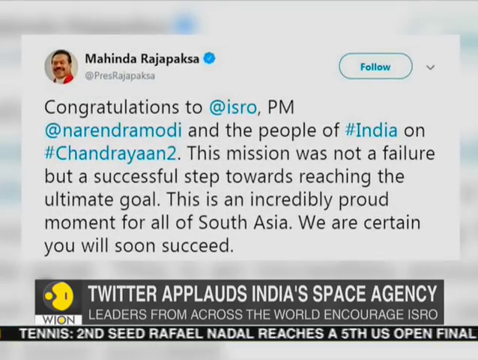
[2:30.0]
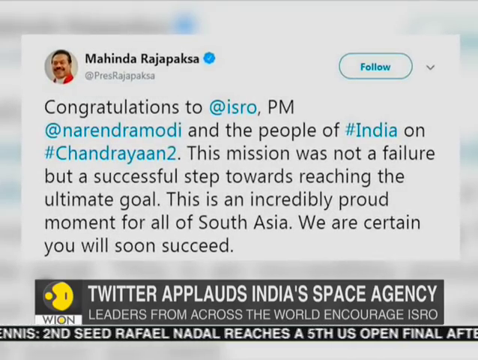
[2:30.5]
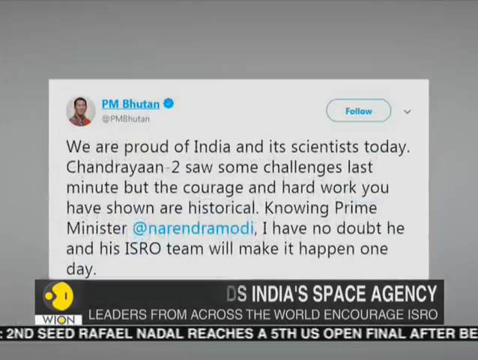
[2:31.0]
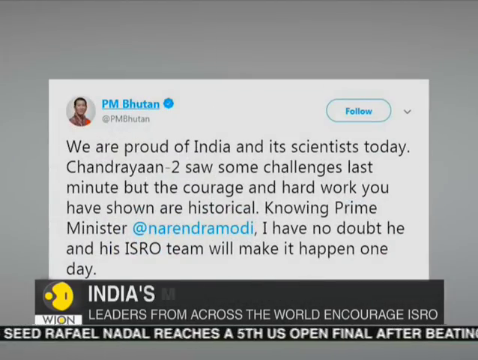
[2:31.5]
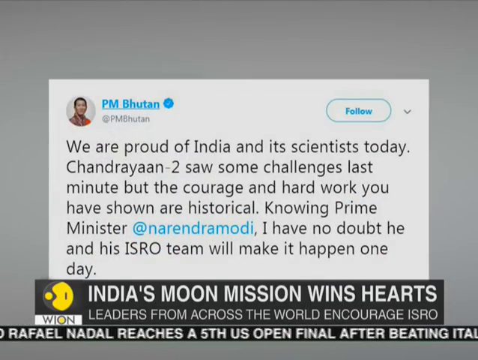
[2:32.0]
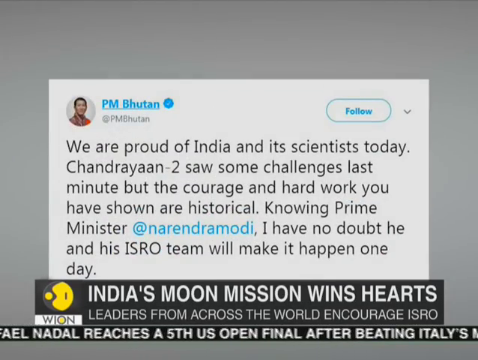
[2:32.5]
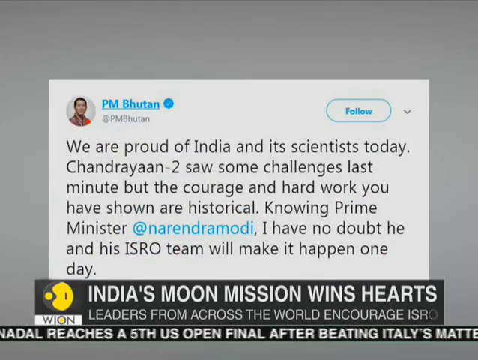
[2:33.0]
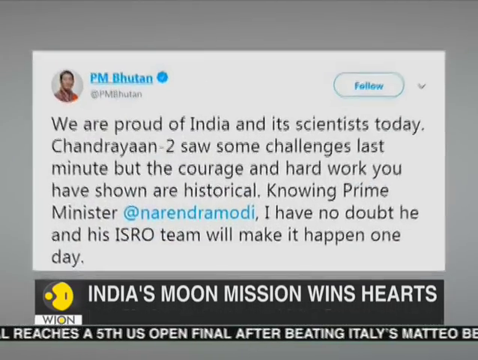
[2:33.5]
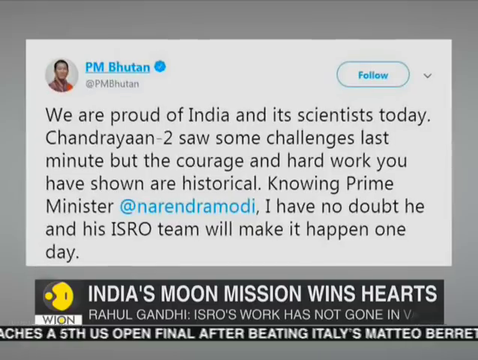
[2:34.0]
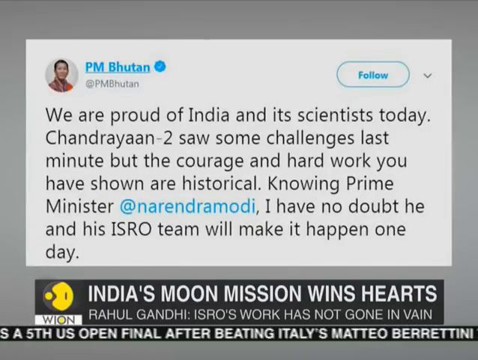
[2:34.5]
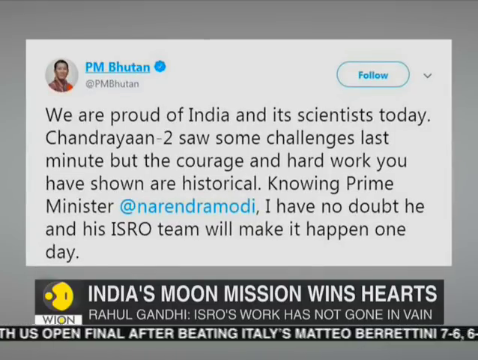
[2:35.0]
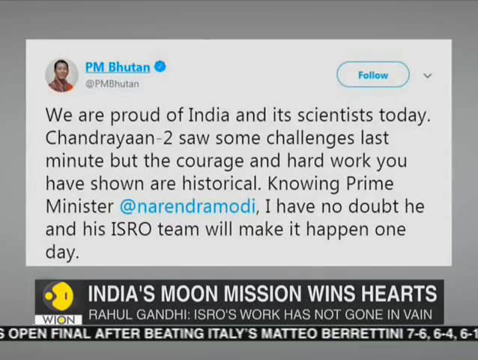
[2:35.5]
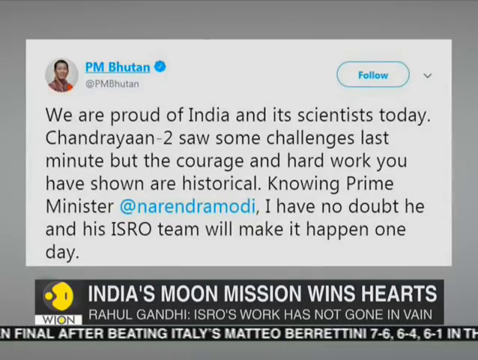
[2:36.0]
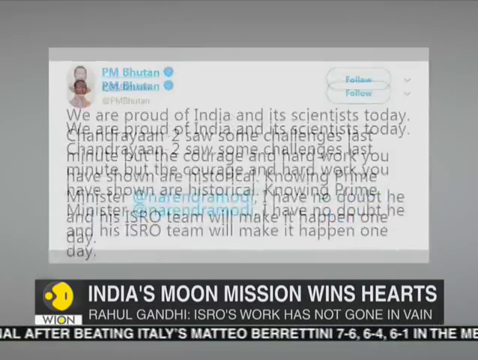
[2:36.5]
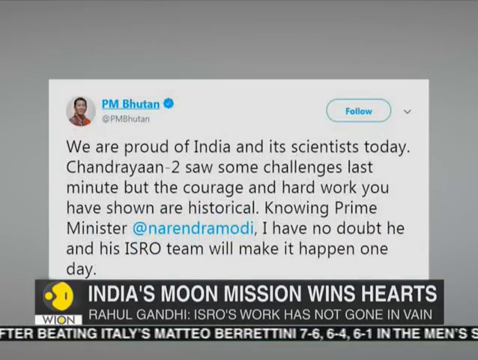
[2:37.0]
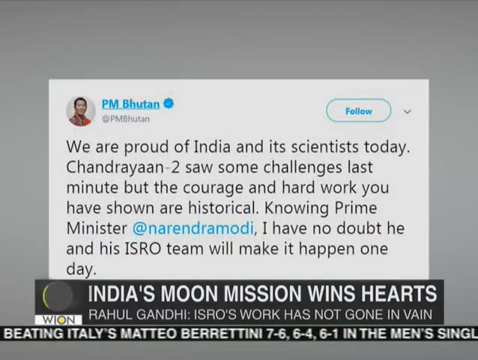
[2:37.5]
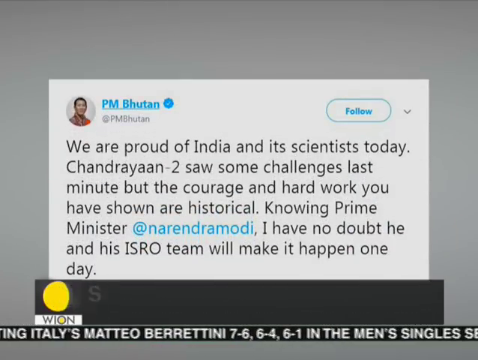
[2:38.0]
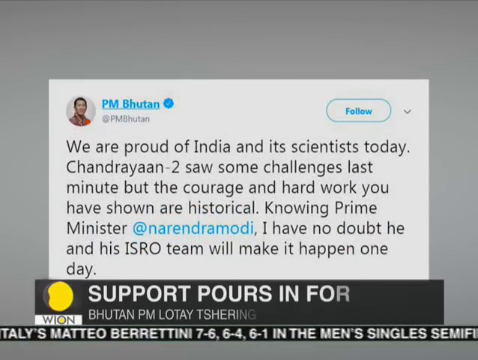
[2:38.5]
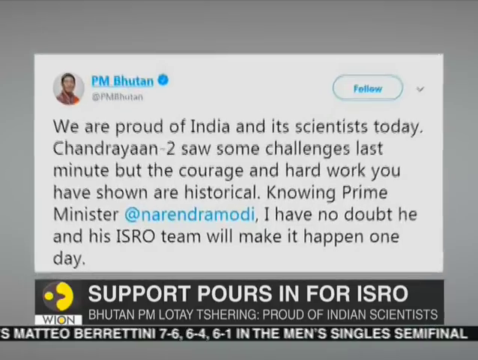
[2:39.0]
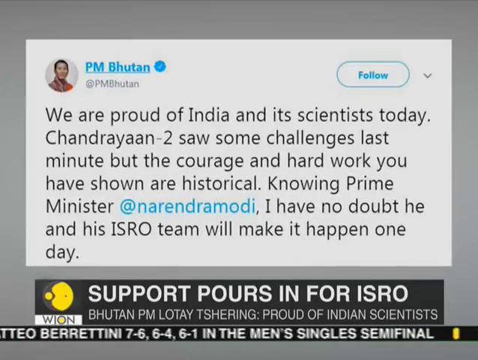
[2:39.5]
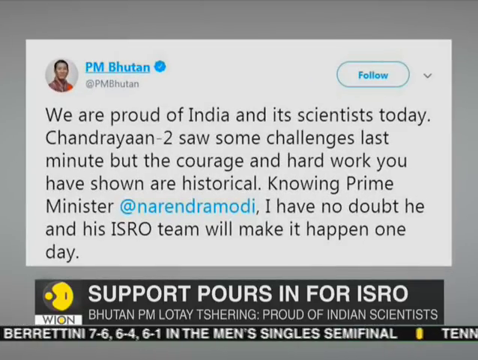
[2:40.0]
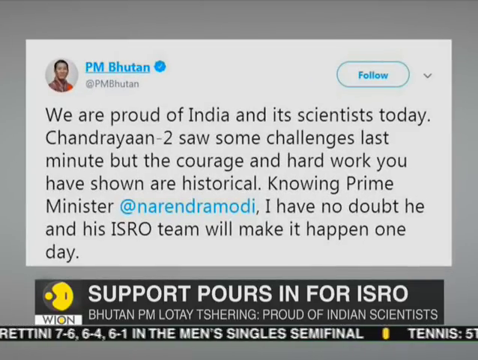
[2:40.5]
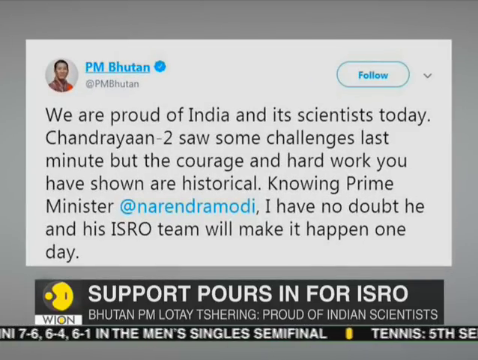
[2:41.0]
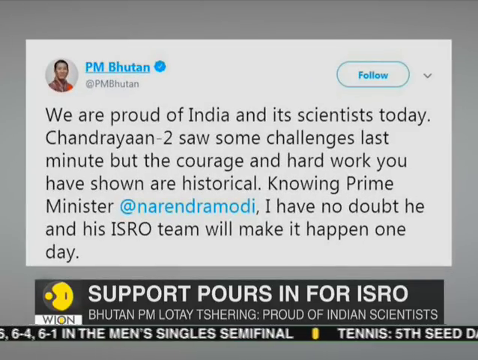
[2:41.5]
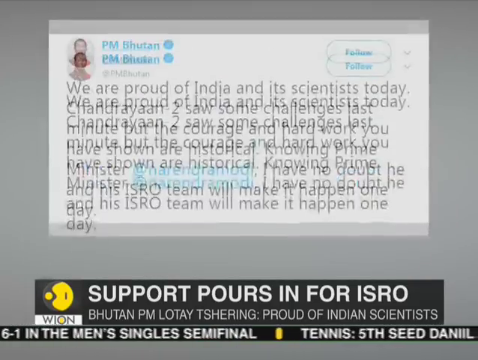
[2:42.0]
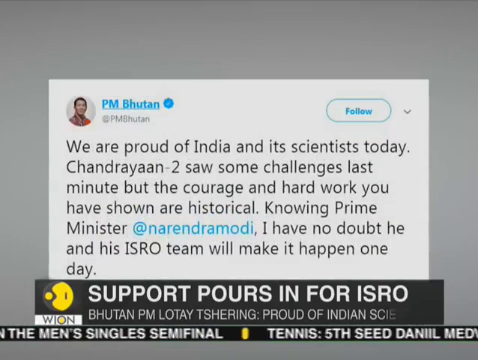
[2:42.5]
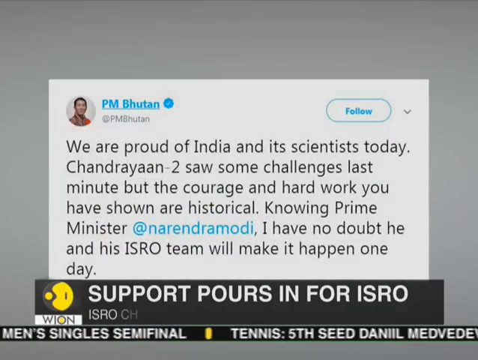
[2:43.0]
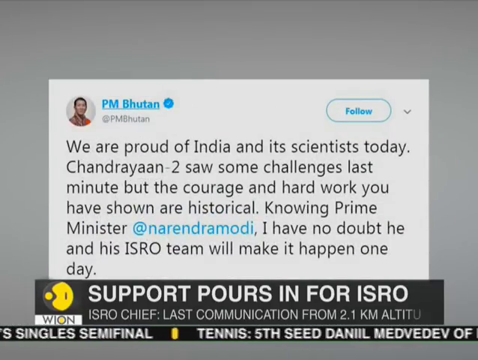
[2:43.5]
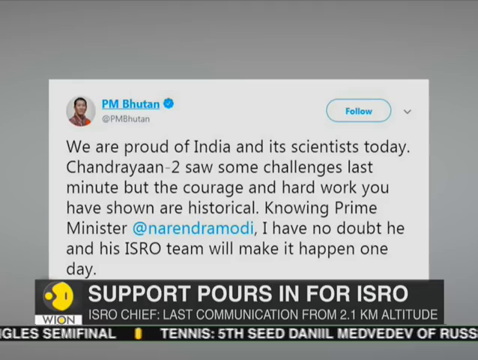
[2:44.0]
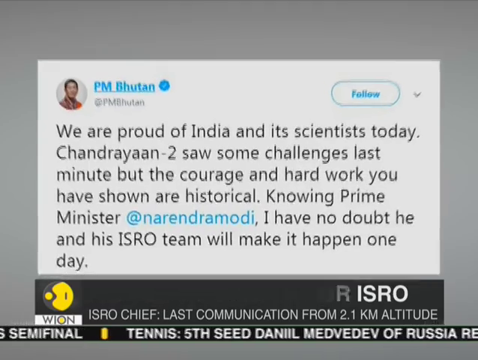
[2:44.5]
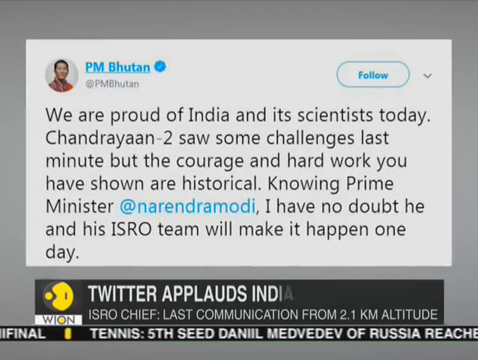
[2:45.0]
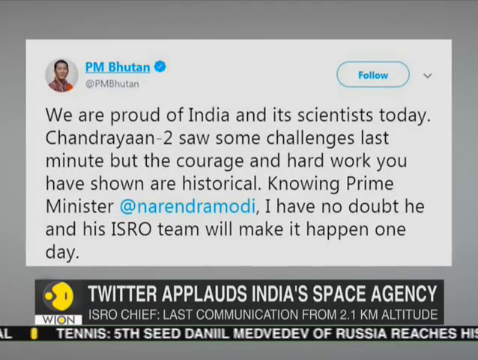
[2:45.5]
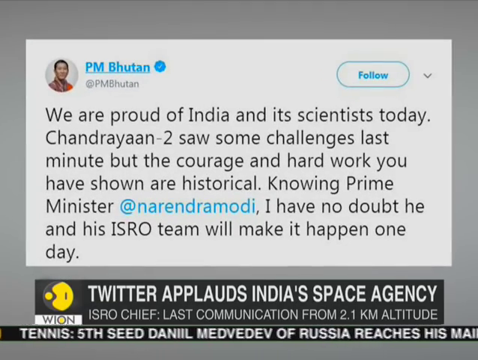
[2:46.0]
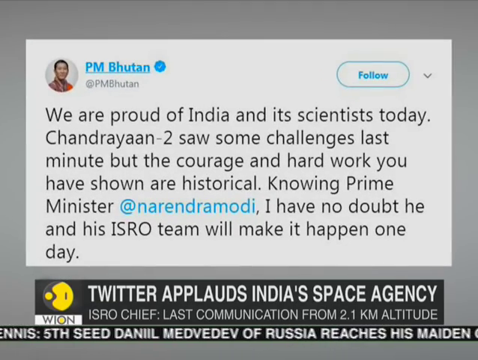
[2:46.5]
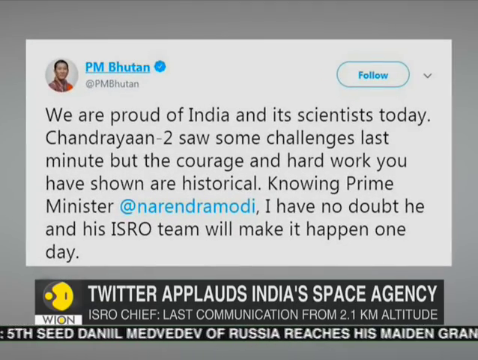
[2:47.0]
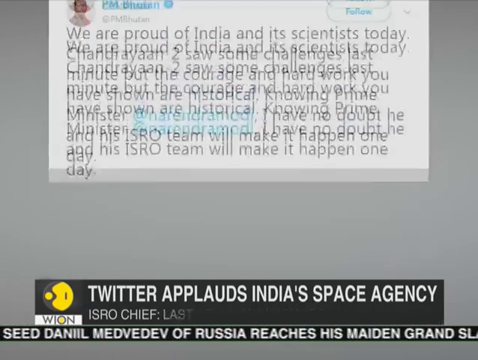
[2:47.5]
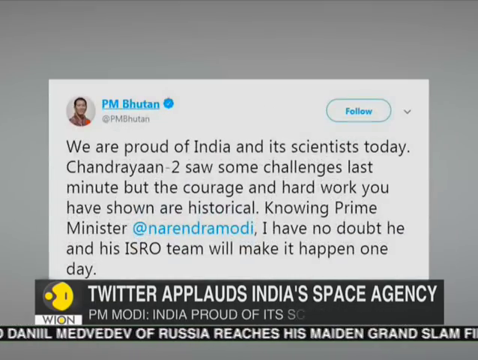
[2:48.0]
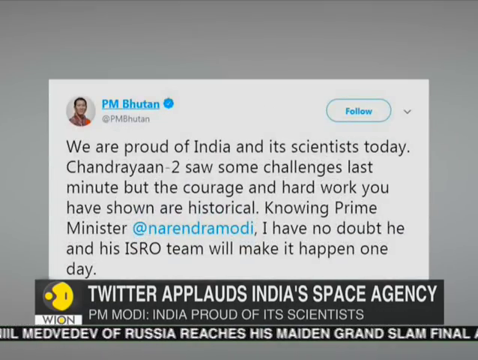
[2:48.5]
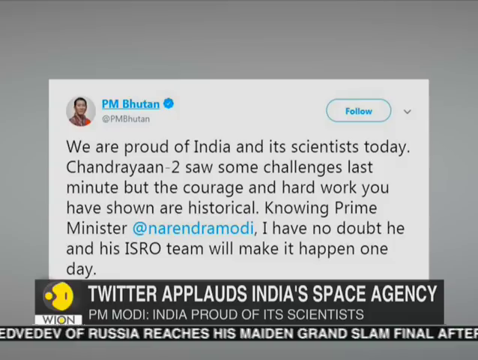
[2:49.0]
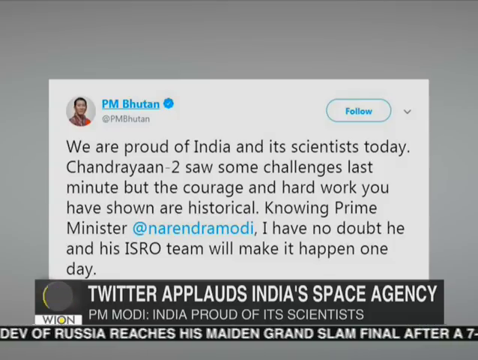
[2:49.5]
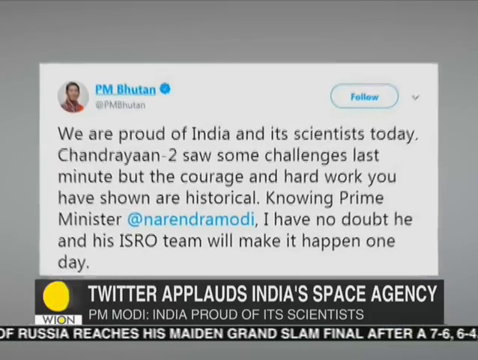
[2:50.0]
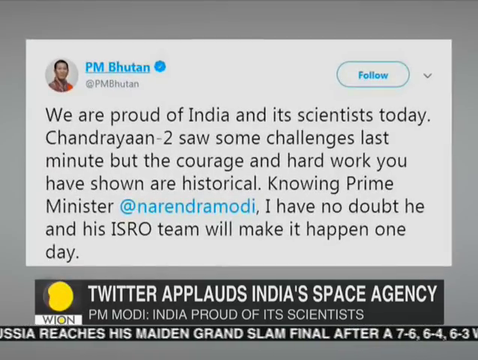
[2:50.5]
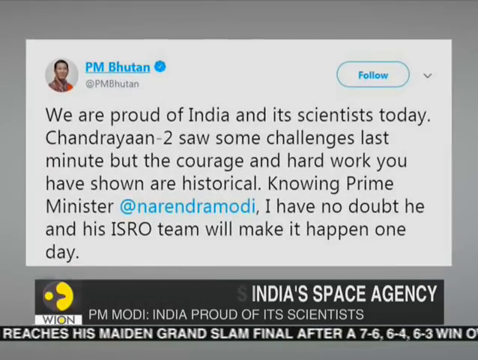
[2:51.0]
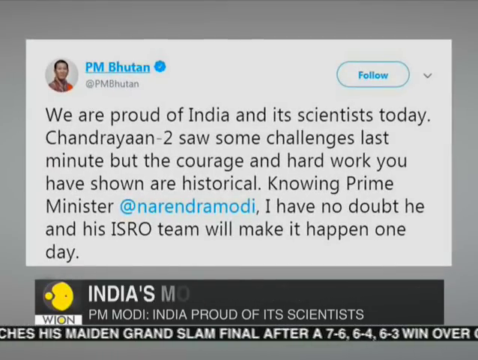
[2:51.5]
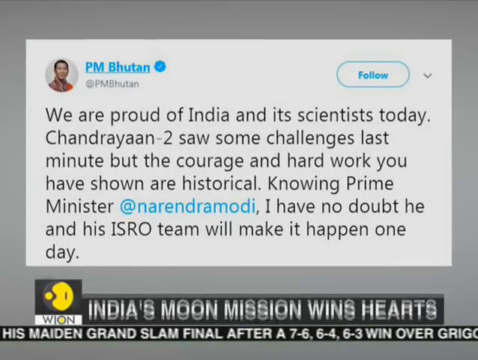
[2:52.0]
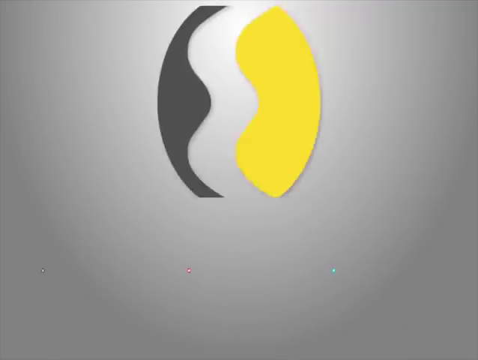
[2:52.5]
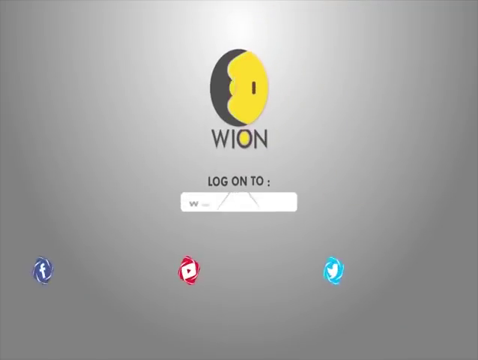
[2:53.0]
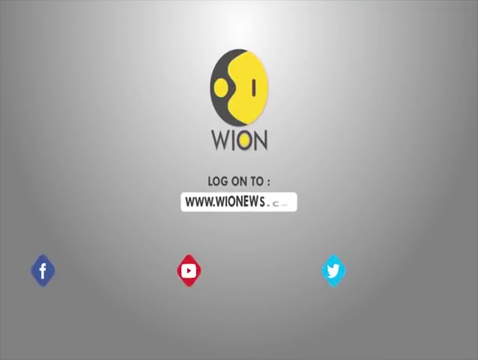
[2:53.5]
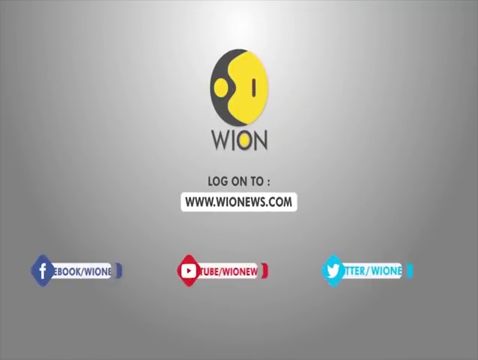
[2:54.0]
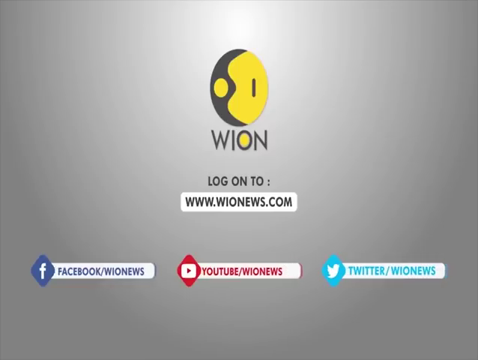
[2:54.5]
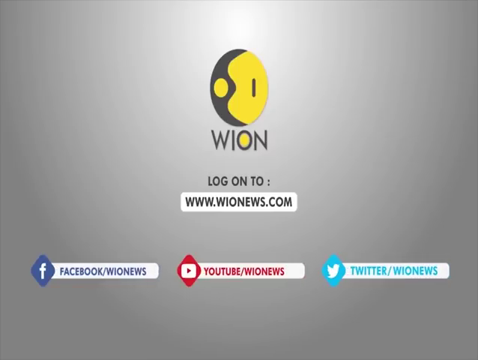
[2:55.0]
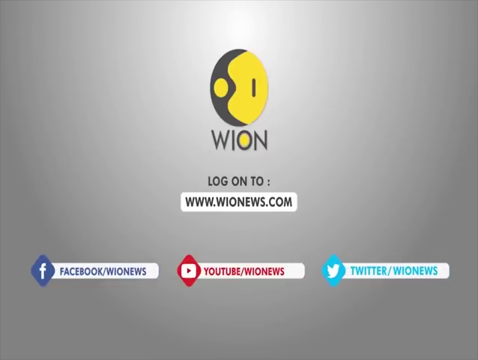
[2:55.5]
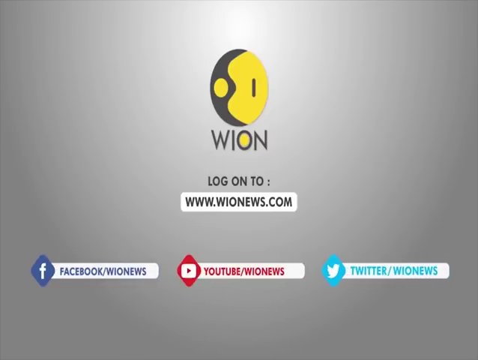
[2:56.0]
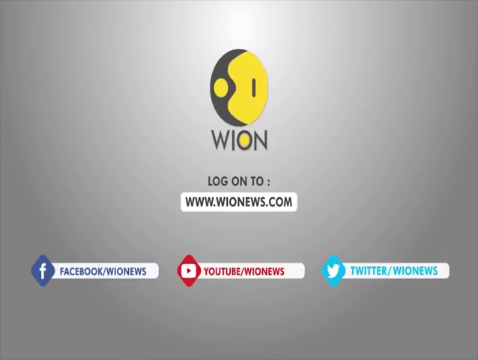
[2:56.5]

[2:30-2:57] The WION (World is One) News report on the Chandrayaan-2 spacecraft shows a tweet of support from Mahindra Rajapaksha: "Congratulations to ISRO, PM Narendra Modi and the people of #India on #Chandrayaan-2. This mission was not a failure but a successful step towards reaching the ultimate goal. This is an incredibly proud moment for all of South Asia. We are certain you will soon succeed." Text reads "Twitter applauds India Space Agency", and the bottom reads "leaders from across the world are encouraging the ISRO". A tweet from the PM of Bhutan reads: "We are proud of India and its scientists today. Chandrayaan-2 saw some challenges last minute but the courage and hard work you have shown are historical. Knowing Prime Minister at Narendra Modi, I have no doubt he and his ISRO team will make it happen one day."